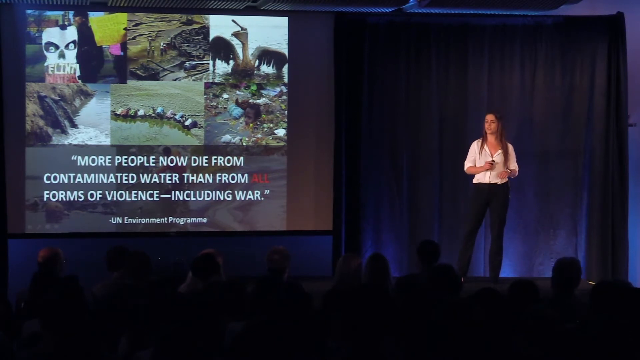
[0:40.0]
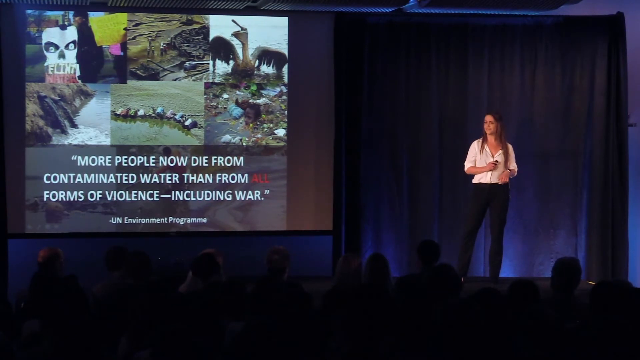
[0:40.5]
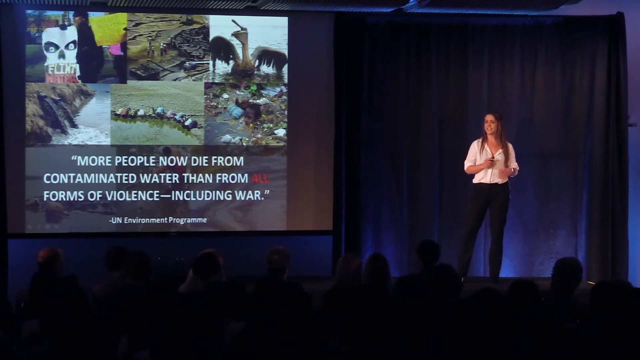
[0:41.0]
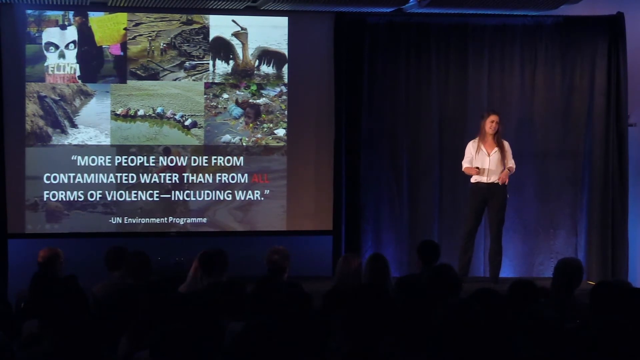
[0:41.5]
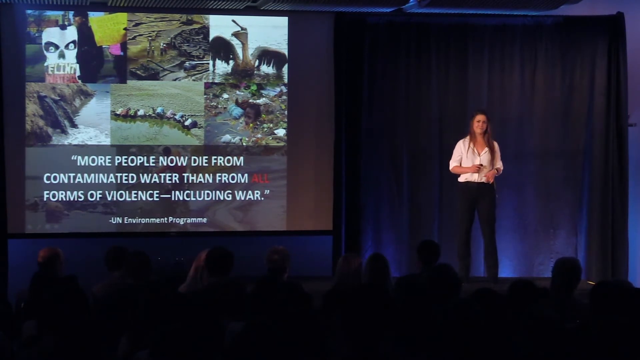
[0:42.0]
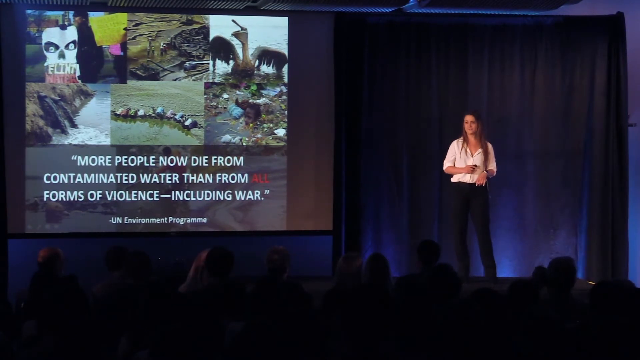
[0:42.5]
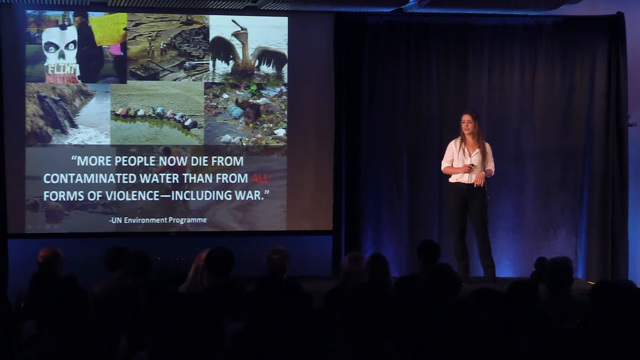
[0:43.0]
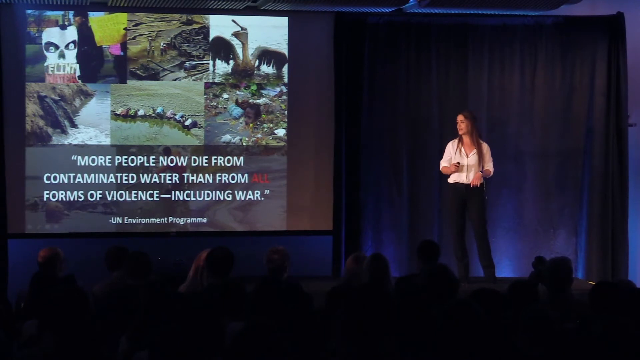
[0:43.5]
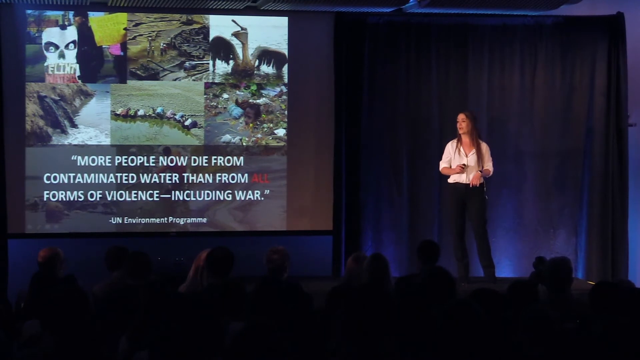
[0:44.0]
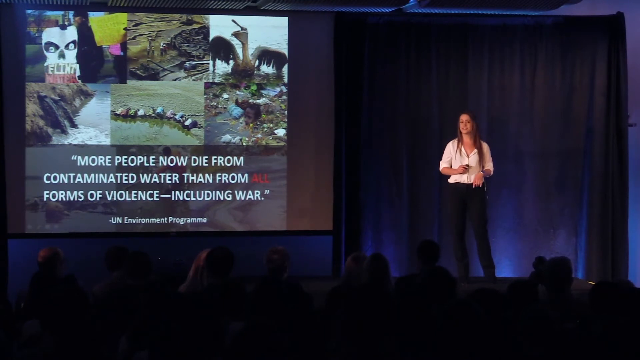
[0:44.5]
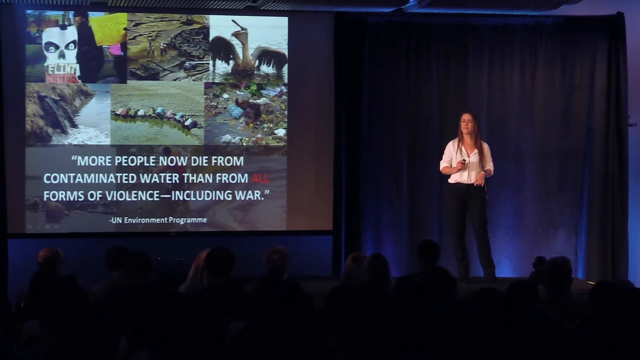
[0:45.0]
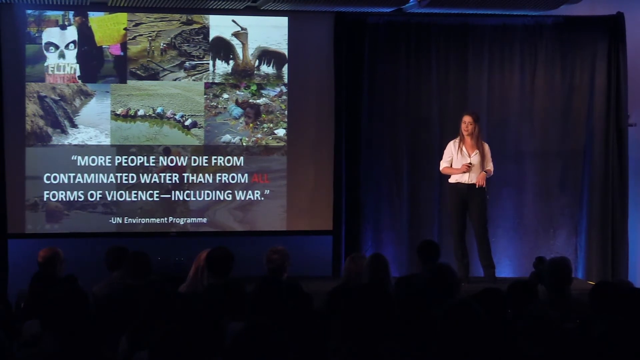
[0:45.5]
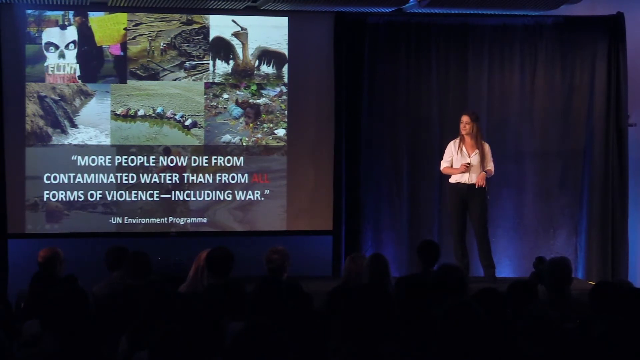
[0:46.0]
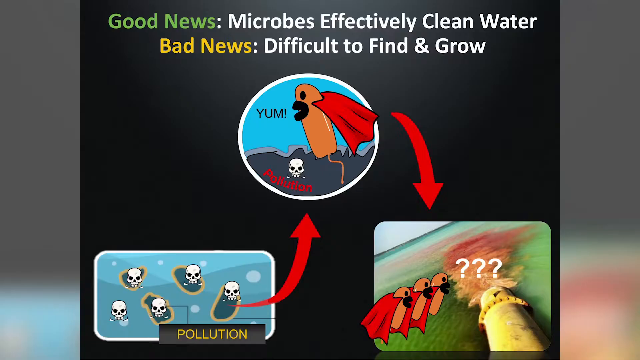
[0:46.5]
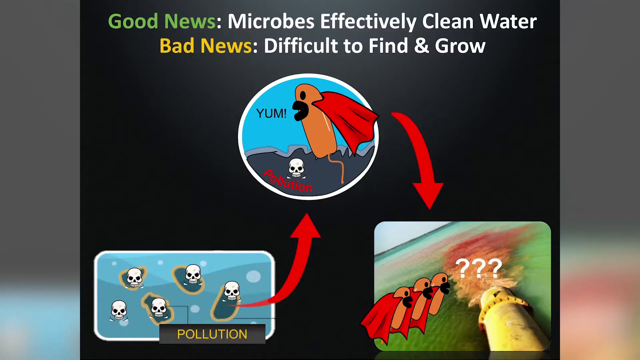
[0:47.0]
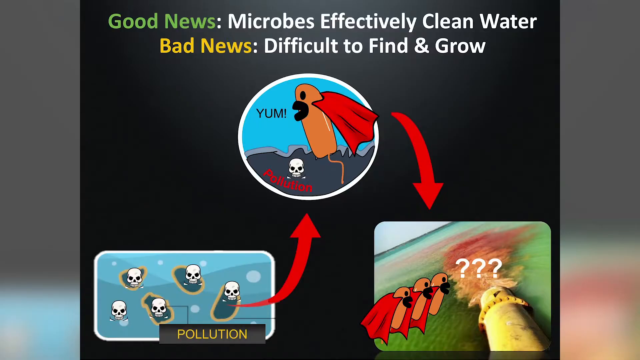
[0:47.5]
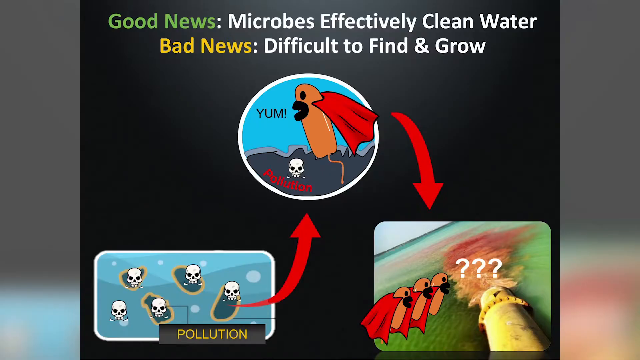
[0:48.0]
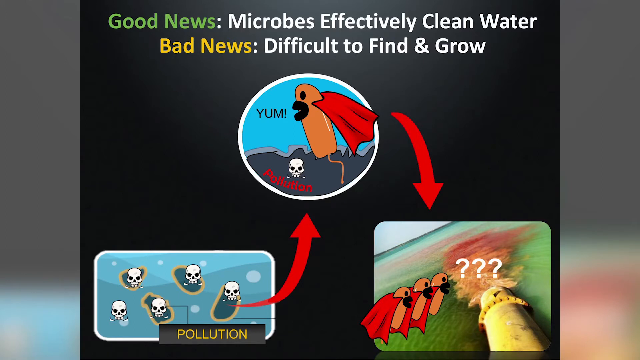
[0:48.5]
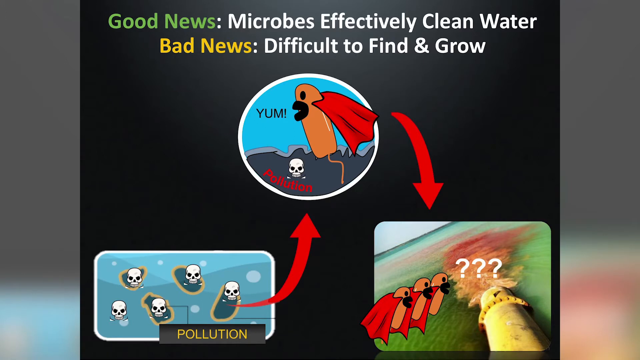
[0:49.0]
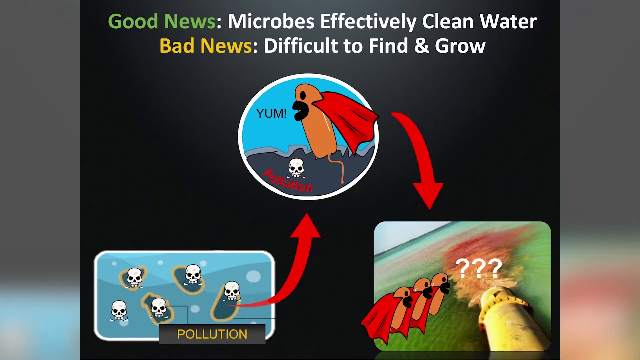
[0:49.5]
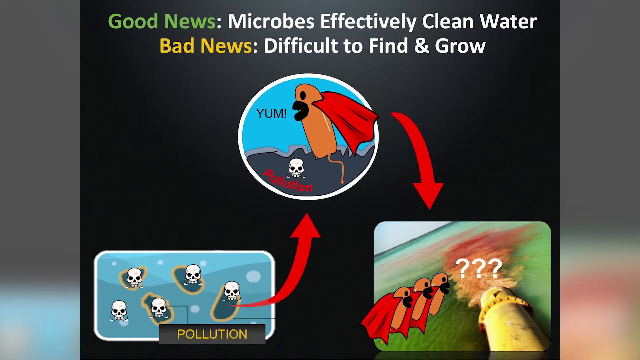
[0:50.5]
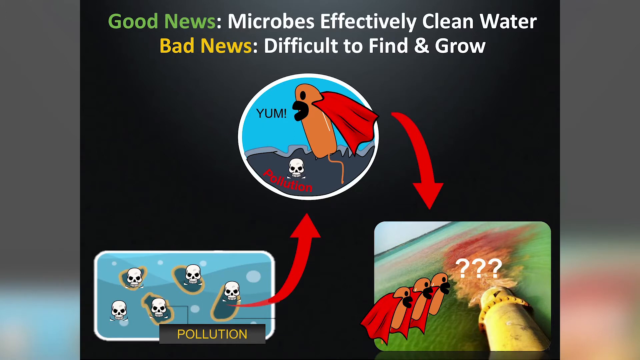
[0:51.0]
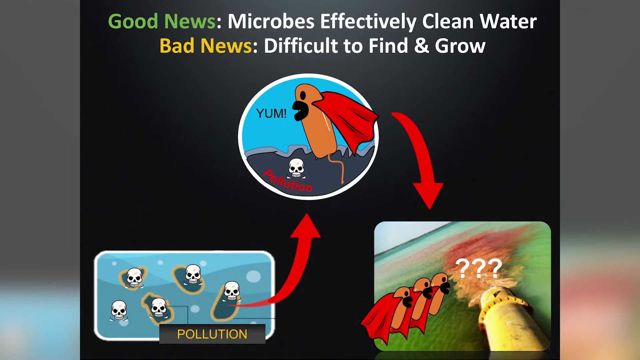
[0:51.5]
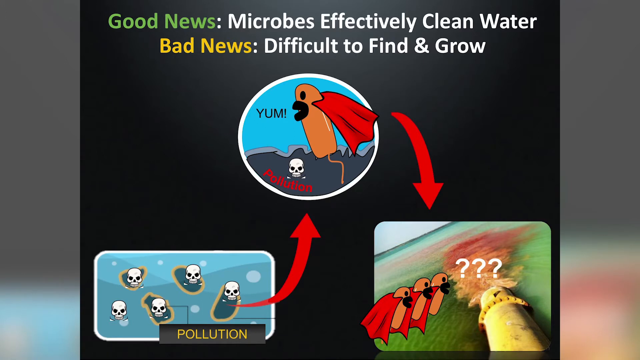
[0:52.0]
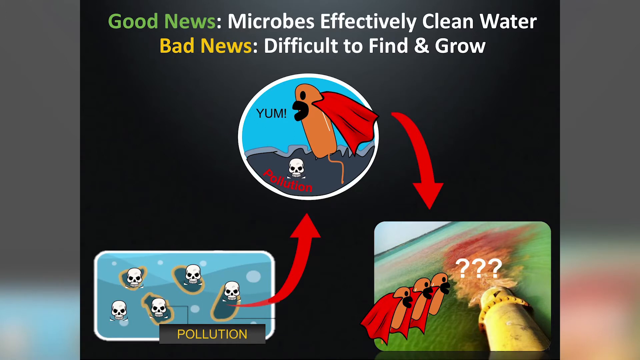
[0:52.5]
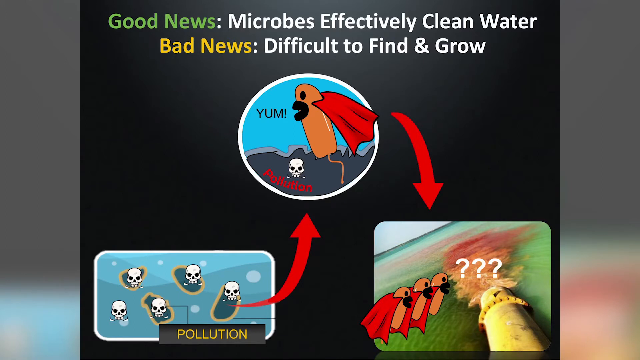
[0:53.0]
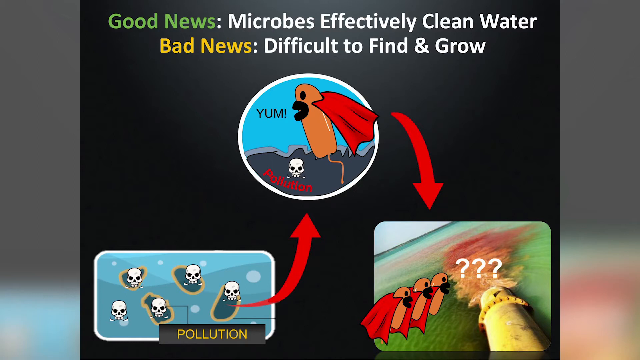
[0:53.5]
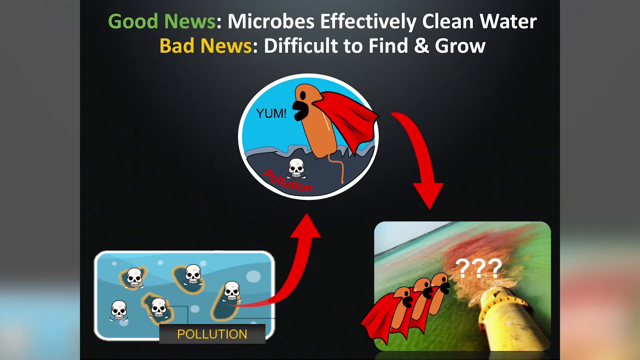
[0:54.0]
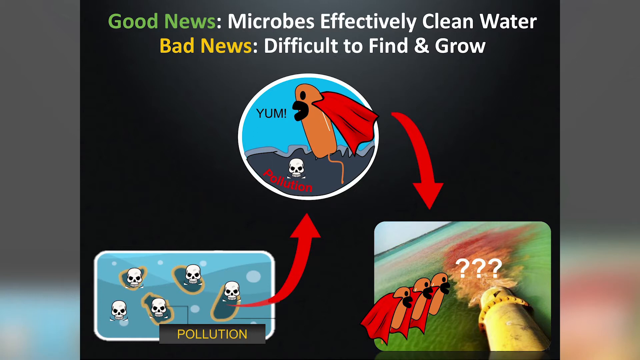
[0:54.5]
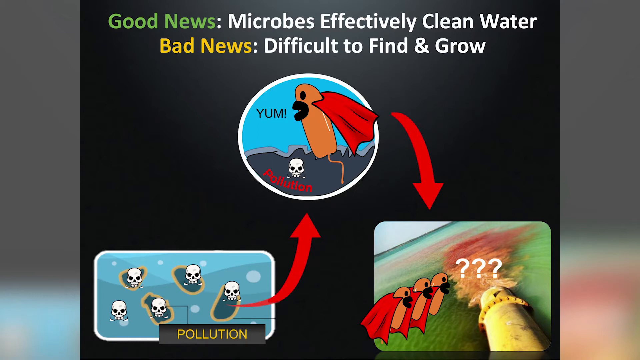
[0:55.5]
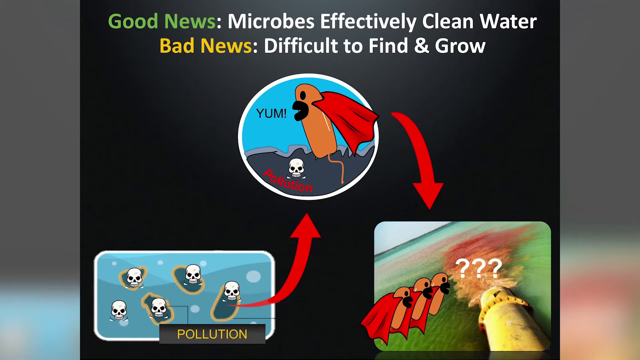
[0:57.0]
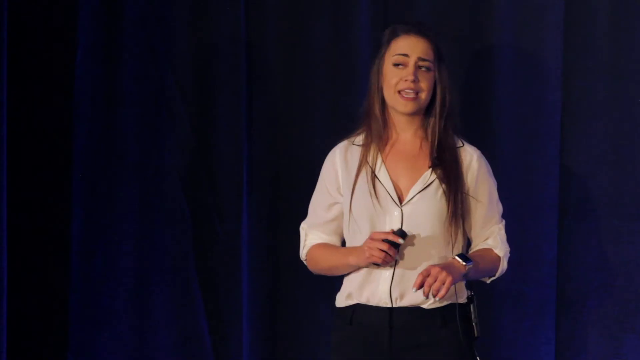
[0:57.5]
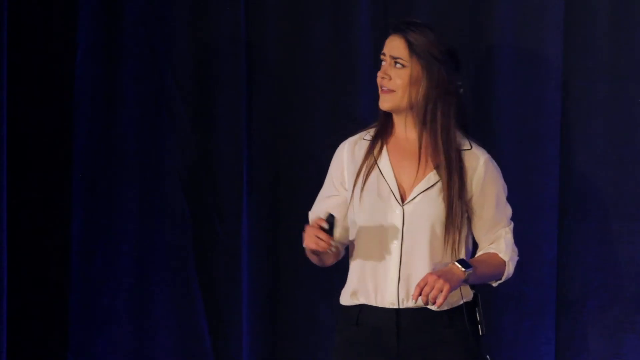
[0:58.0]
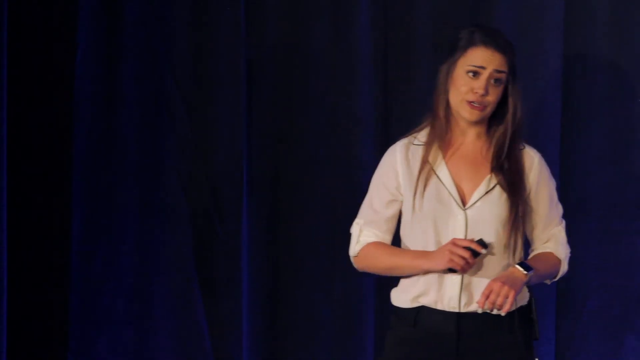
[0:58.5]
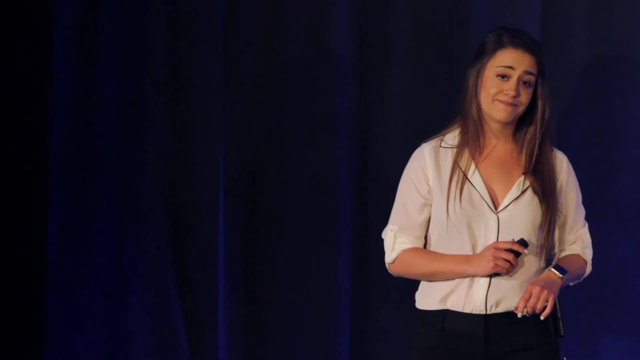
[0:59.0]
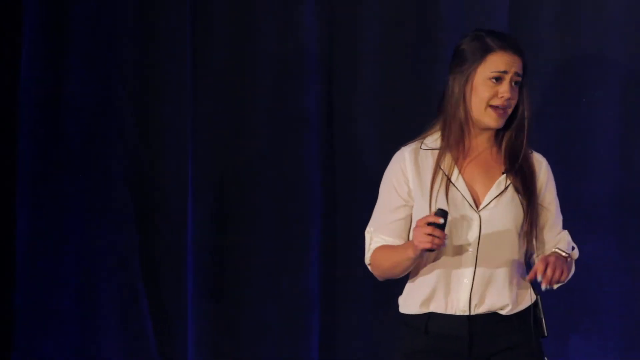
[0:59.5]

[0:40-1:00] In a TED Talk-style speech, a young woman on the right wears a white dress shirt and black slacks, with what looks like a smartwatch on her wrist, and holds a black clicker in one hand. Her brown hair is behind her. On stage is a blue curtain with what almost looks like soft purple lighting behind it. Audience members watch in the foreground at the bottom. On the left, a projection screen shows a series of apparently about nine images: a man dressed in black holding a skull sign that says "flint water"; a group of men in hard hats around a giant open crater; a bird covered in oil; black toxic sludge coming out of pipes; children huddled around a dirty green puddle; a child floating in trash water; children's toys floating in water; a man with a net trying to fish something out; and another water image. The woman is very animated, using hand gestures to emphasize her point. Another slide comes up on the projector with a mix of green, gold and white text: "good news microbes effectively clean water, bad news difficult to find and grow." Beneath it is a circle with a blue and gray background and black and red text, containing an odd cartoon character shaped almost like a floating hot dog or a tampon with a string coming down. The character wears a red cape and has huge black lips, with the text "yum." It hovers over gray water that has a skull and the word "pollution" in red, with red arrows below. On the left side is a blue background bordered in white with floating skulls and the word "pollution." Further over are more of the caped, hot dog-looking characters and a pipe in what looks like a real photograph overlaid with cartoon images, spewing toxic waste into water. The view holds on this slide for a while, then returns to the woman speaking.